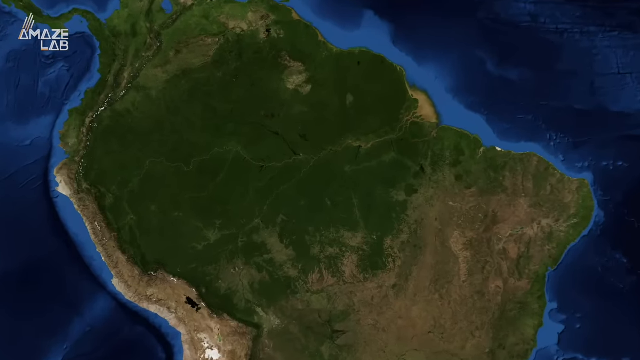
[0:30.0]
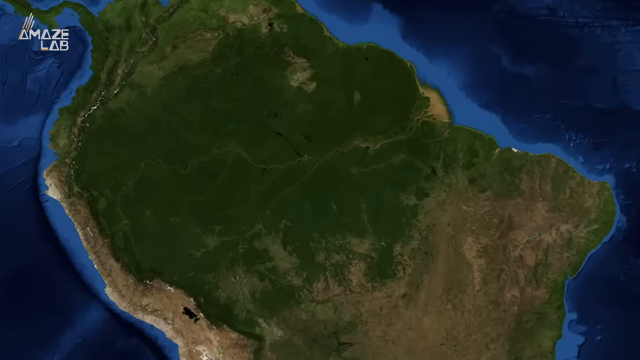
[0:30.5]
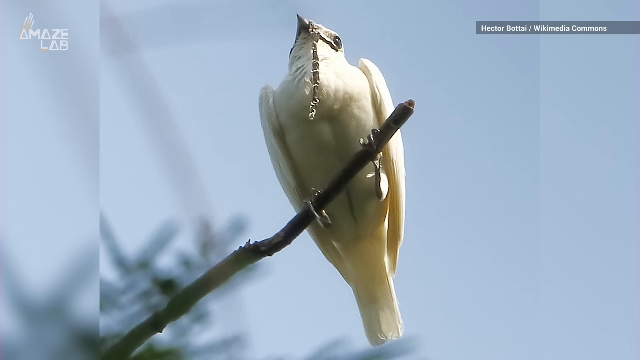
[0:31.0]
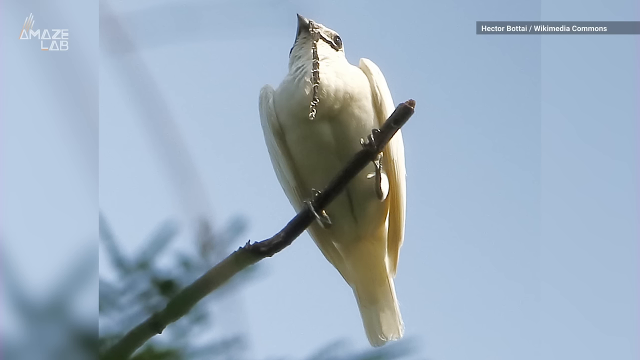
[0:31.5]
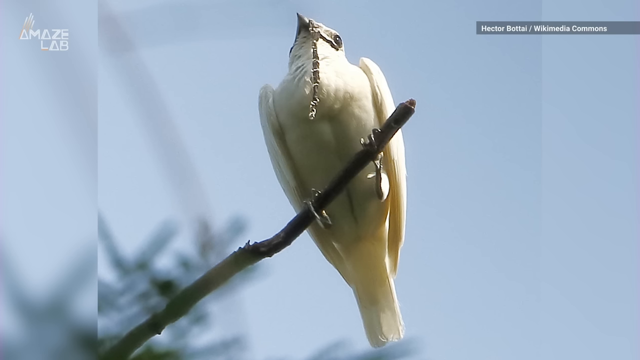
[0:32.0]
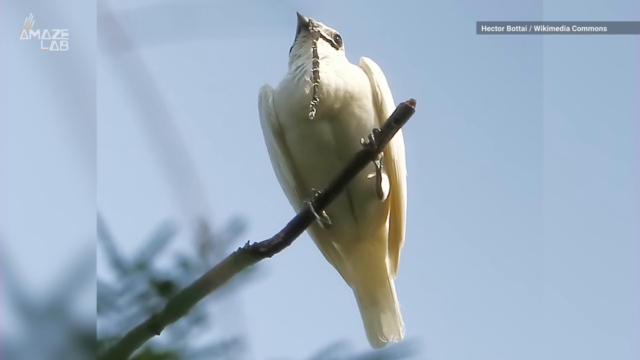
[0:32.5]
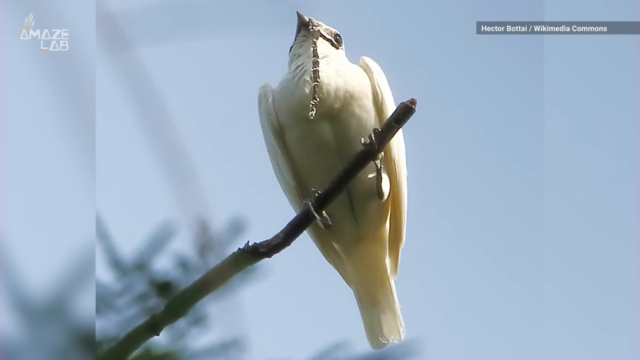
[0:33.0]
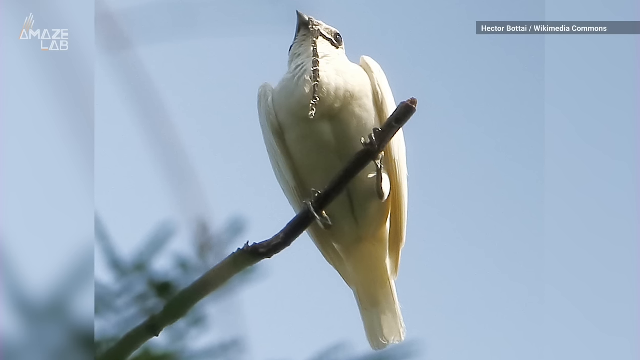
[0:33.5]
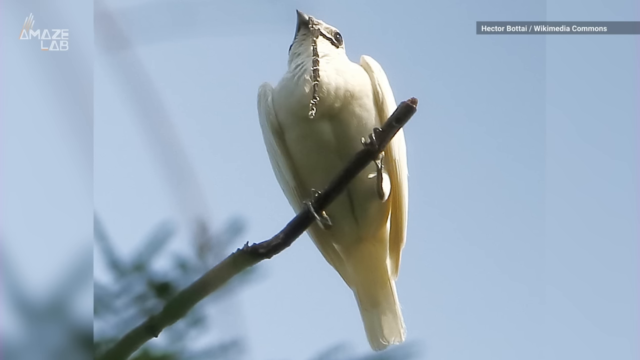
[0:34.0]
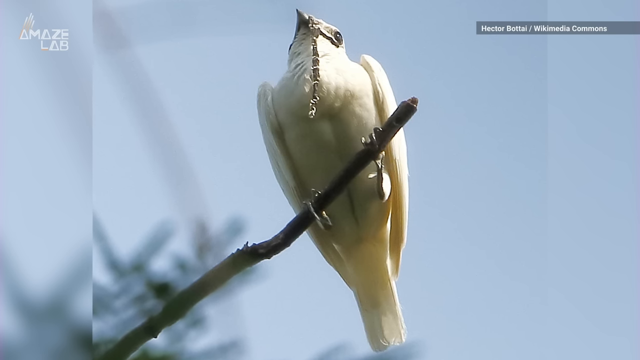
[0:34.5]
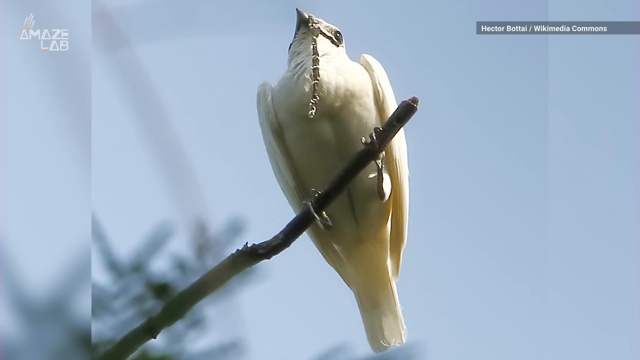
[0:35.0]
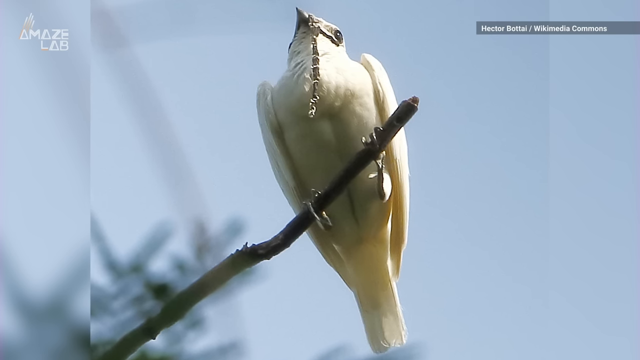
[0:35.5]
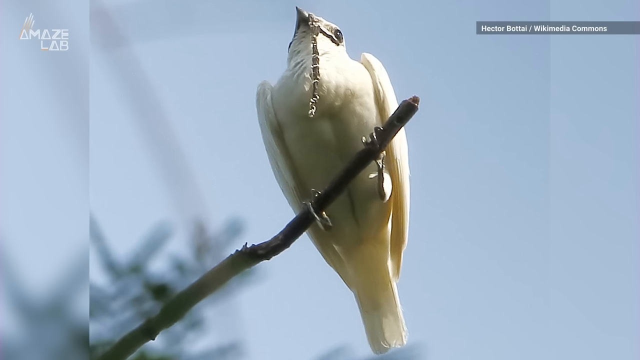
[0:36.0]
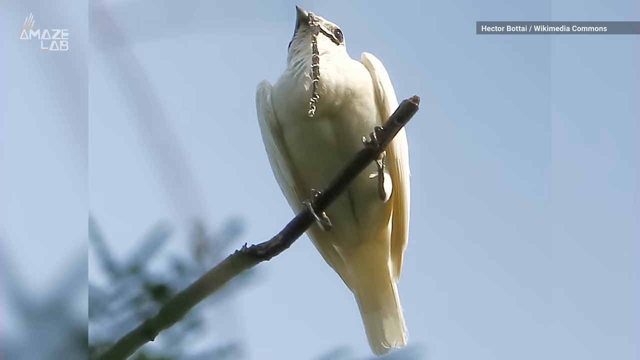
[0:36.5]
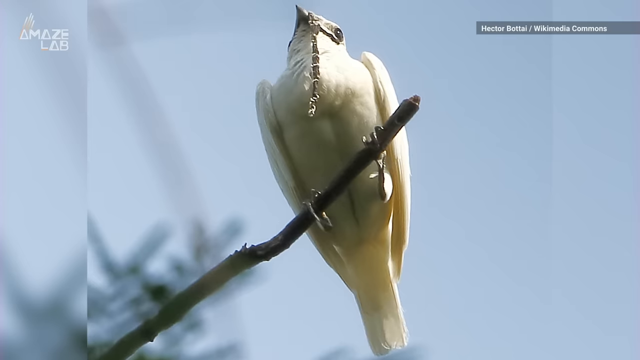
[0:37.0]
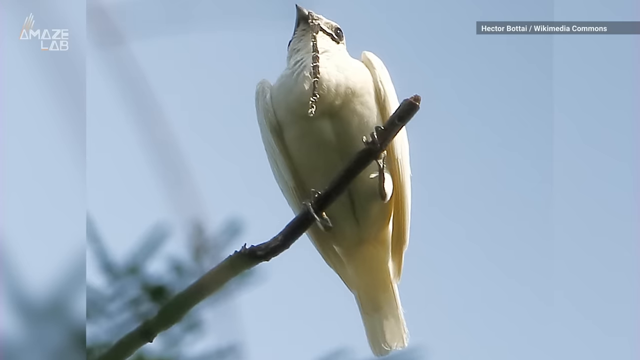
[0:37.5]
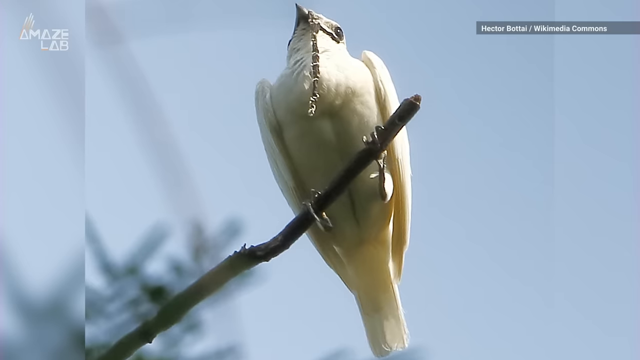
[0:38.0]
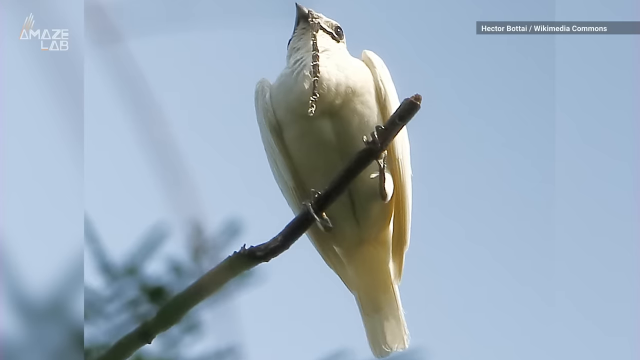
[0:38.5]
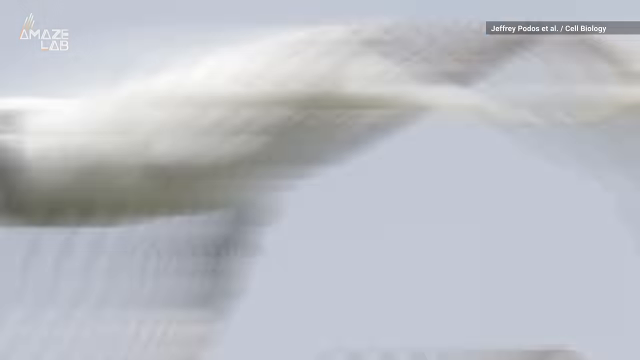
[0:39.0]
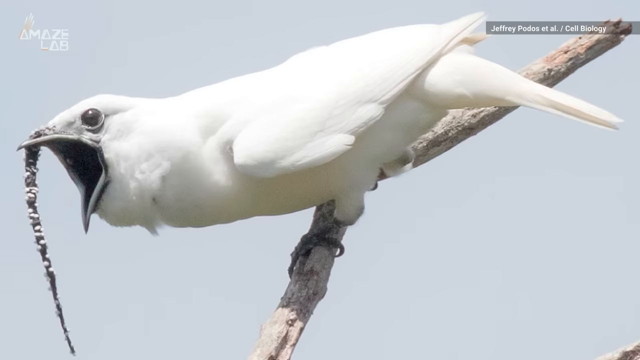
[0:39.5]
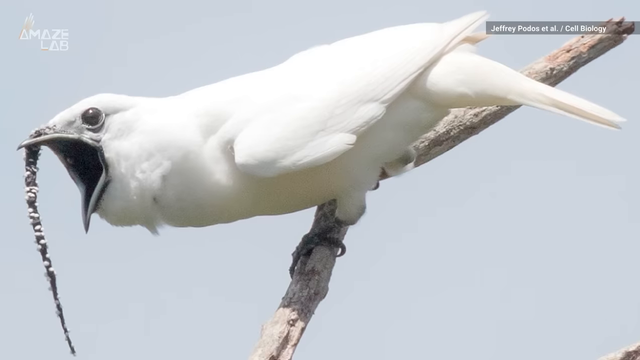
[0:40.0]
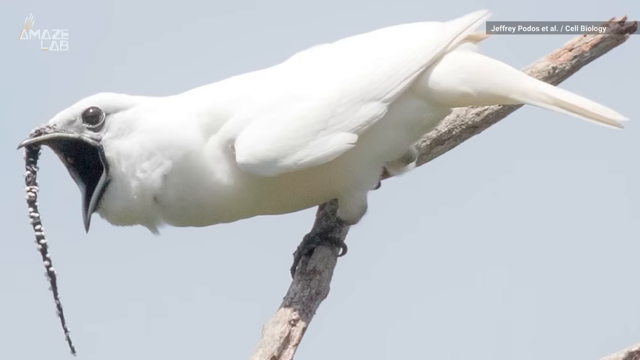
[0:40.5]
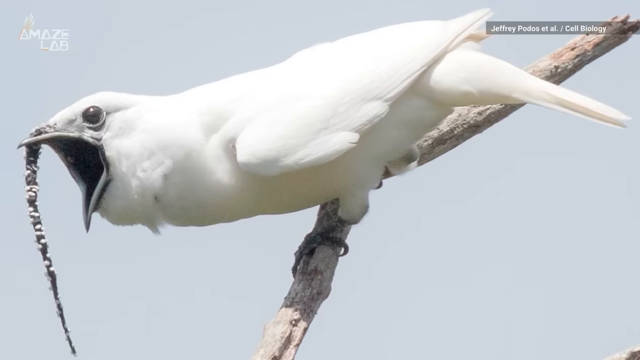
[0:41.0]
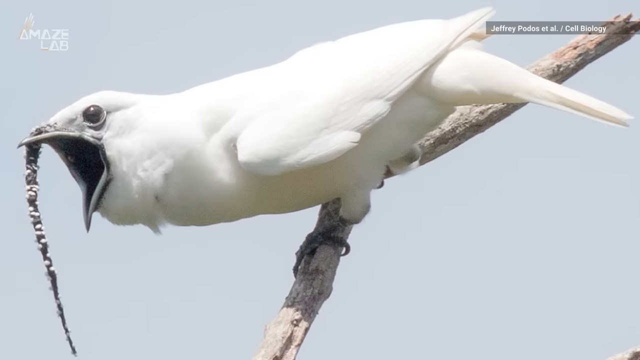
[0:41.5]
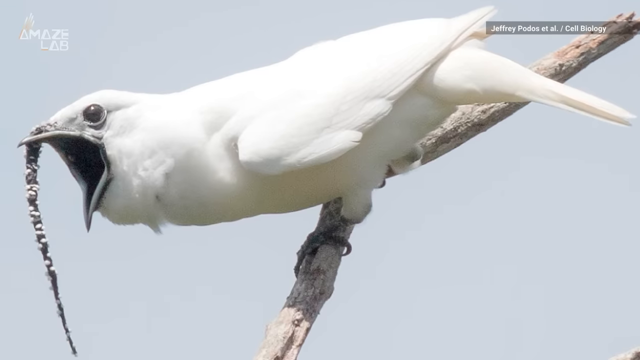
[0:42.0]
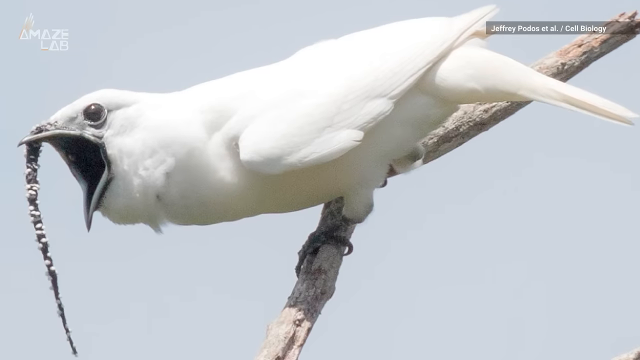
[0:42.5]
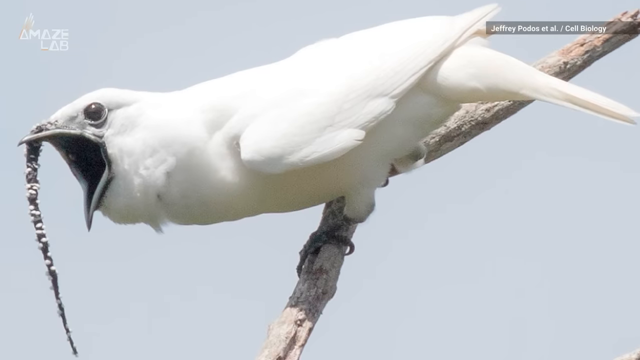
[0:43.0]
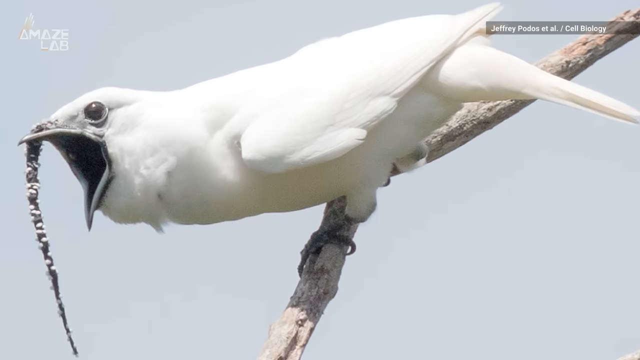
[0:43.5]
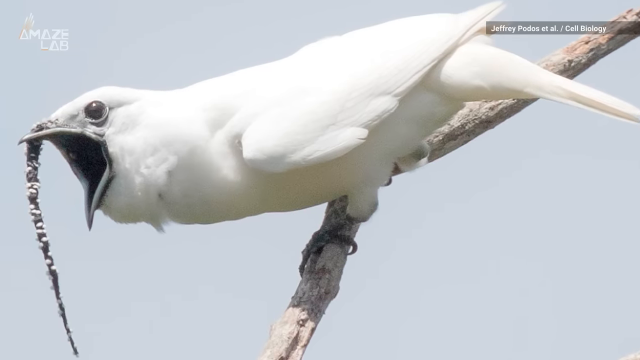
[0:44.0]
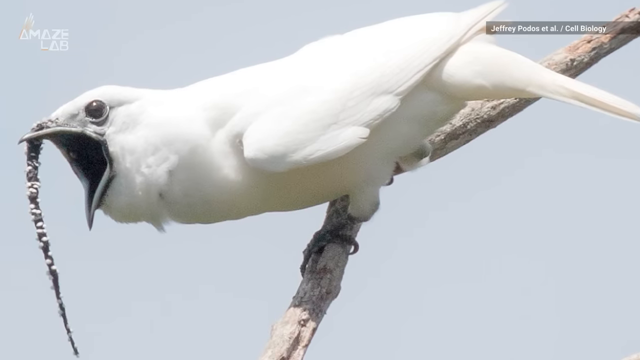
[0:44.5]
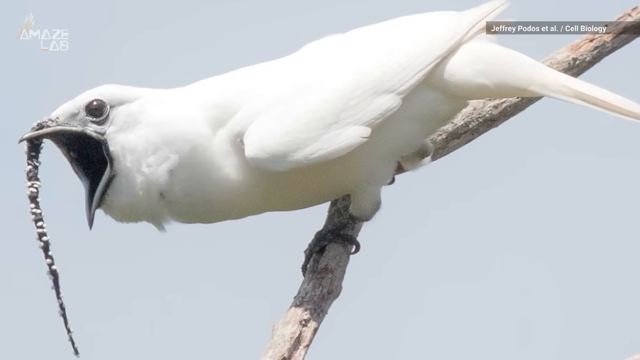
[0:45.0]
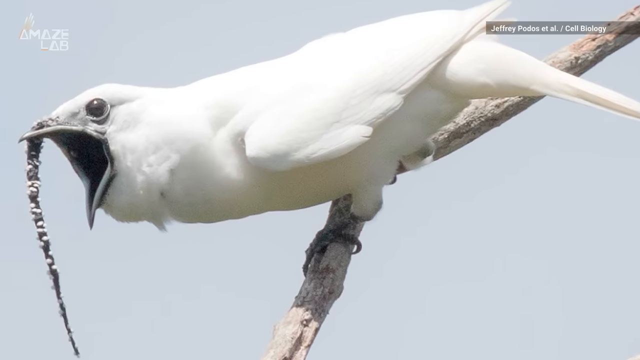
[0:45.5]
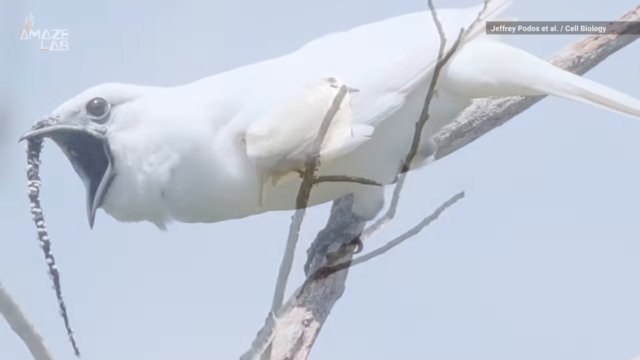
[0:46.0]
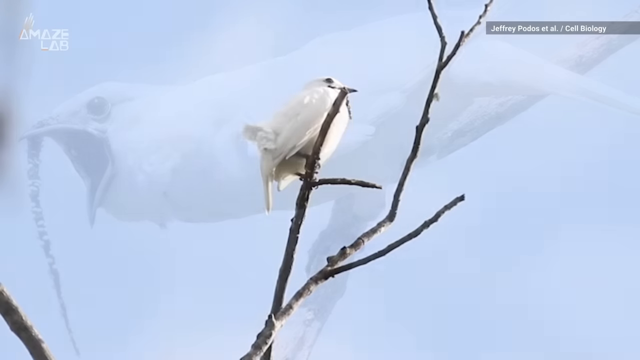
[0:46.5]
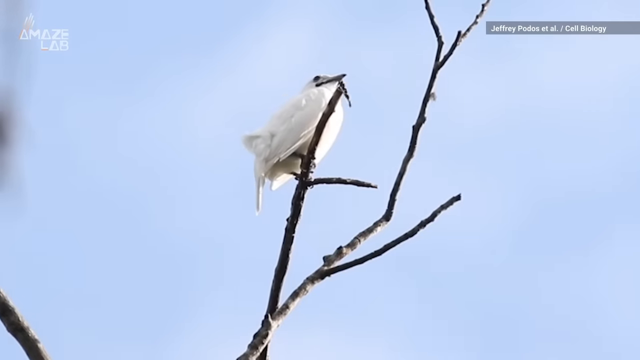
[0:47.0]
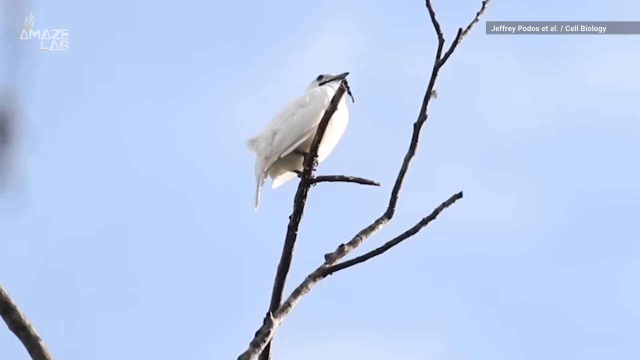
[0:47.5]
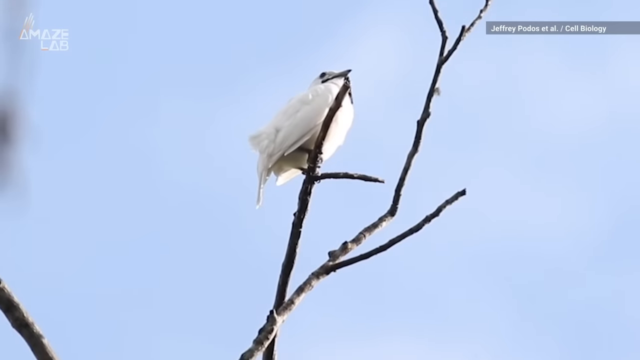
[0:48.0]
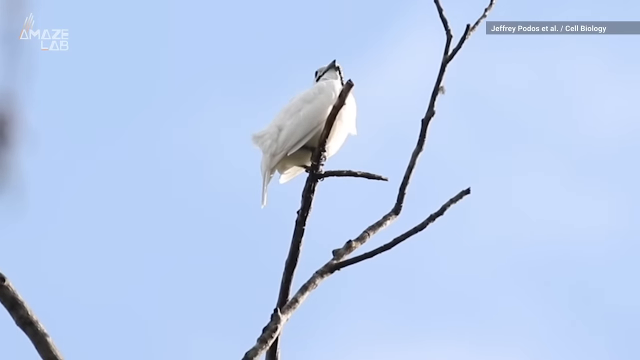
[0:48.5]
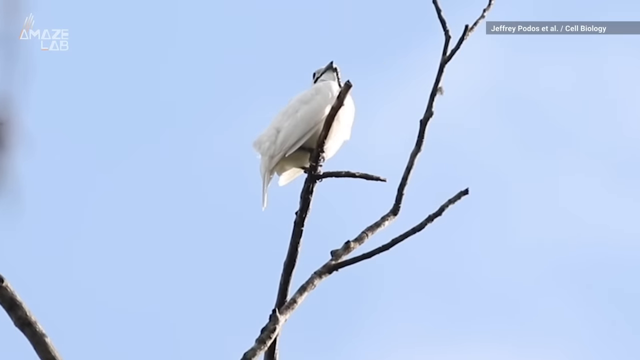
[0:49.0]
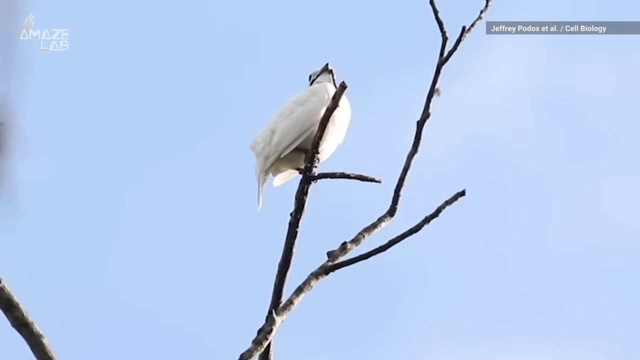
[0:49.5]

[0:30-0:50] An image shows a large piece of land. It is primarily dark green, at least on the top left, while toward the bottom right there is a lot of brown, apparently showing fewer trees. The land is surrounded on each side by a large body of water, with dark blue deep areas of water mainly at the bottom left and top right. The video changes to a close-up of a white bird standing on a branch, basically showing its belly. The name of the person who took the photo, Hector Bottai, appears at the top right, with "Wikimedia Commons" next to it. The shot slowly zooms in on the bird. The scene changes to a different bird, credited to Jeffrey Podos, with "Cell Biology" to the right of the name. This bird looks to the left with its mouth open, presumably making the loud call, and stands on a light brown branch, kind of like a twig. The scene changes to the bird moving, still standing on the branch, now looking to the right.